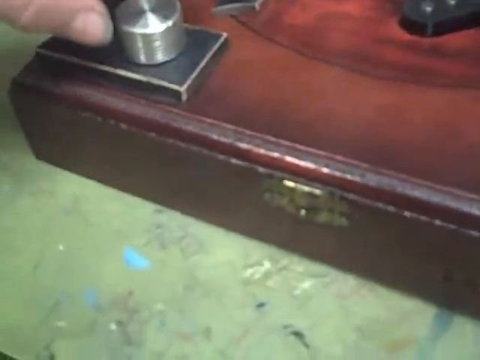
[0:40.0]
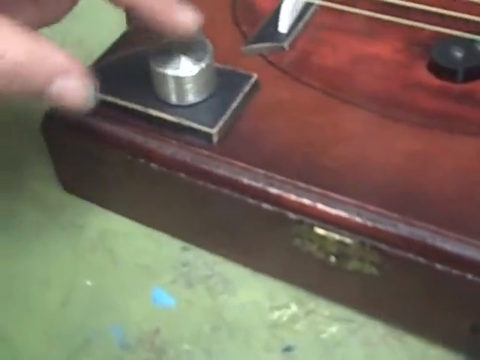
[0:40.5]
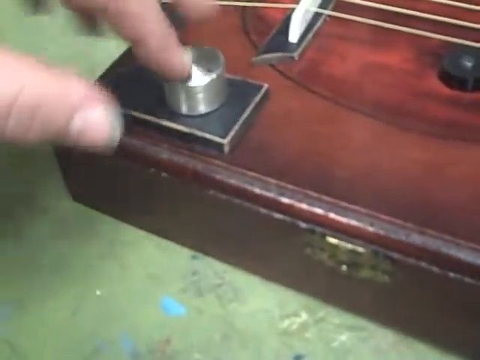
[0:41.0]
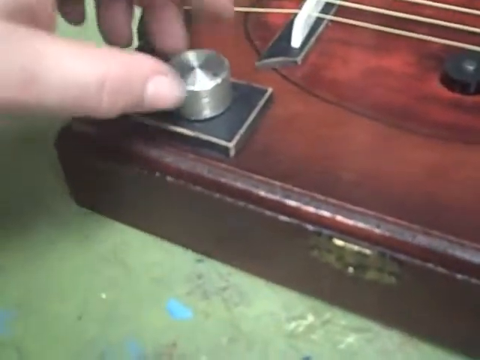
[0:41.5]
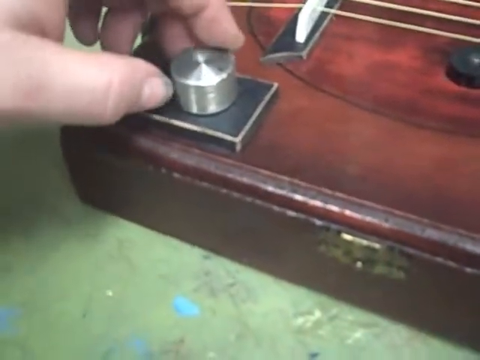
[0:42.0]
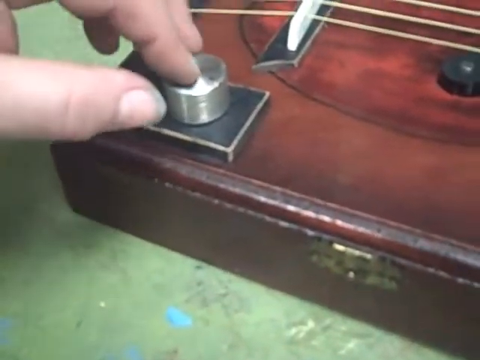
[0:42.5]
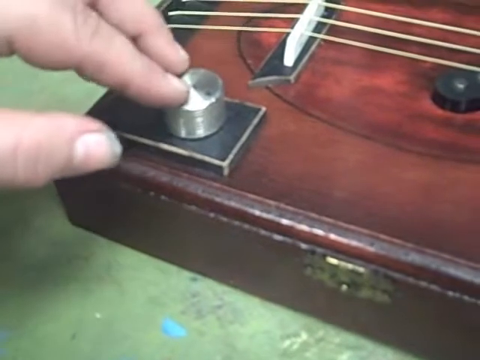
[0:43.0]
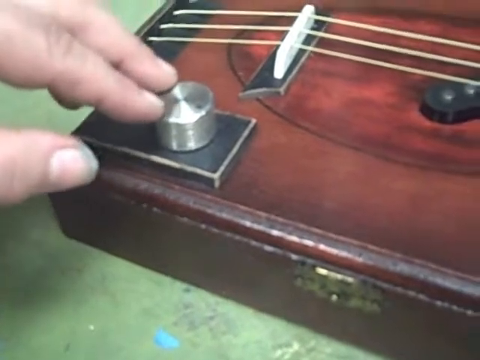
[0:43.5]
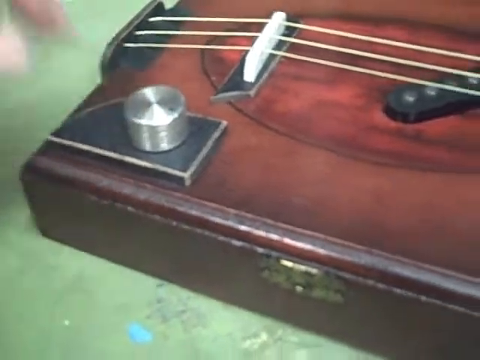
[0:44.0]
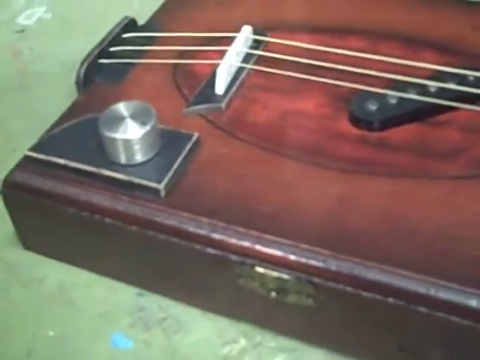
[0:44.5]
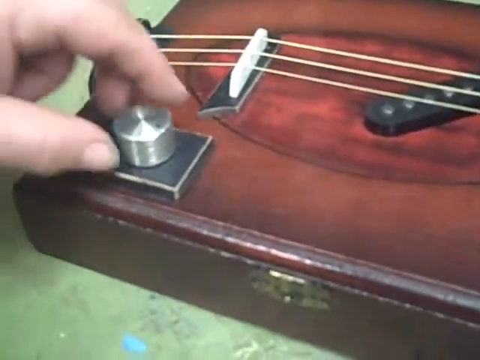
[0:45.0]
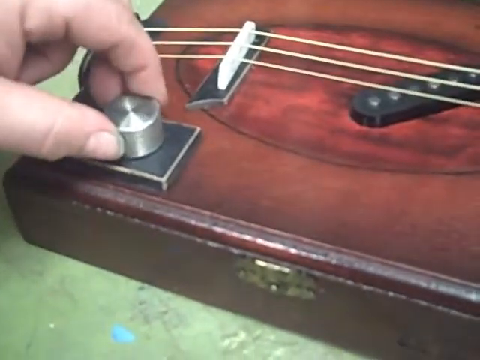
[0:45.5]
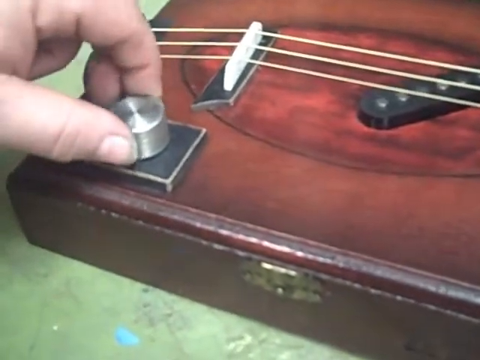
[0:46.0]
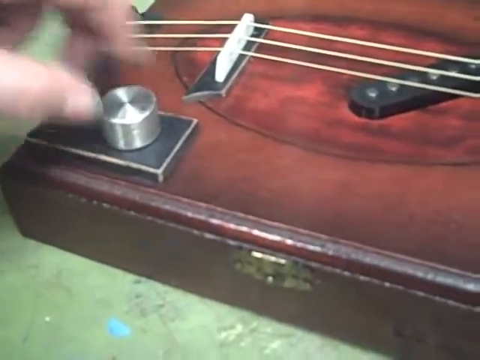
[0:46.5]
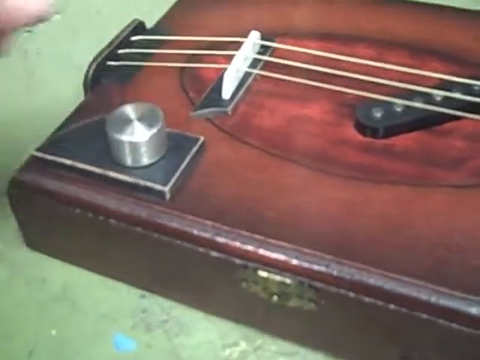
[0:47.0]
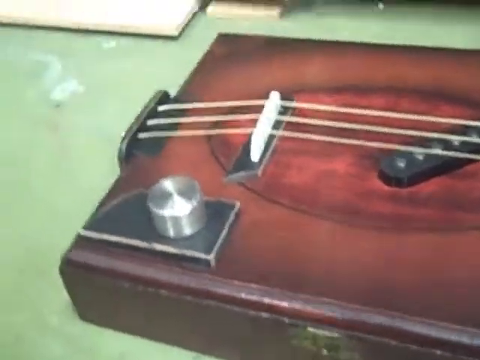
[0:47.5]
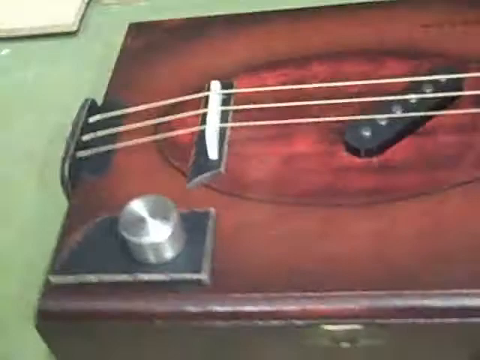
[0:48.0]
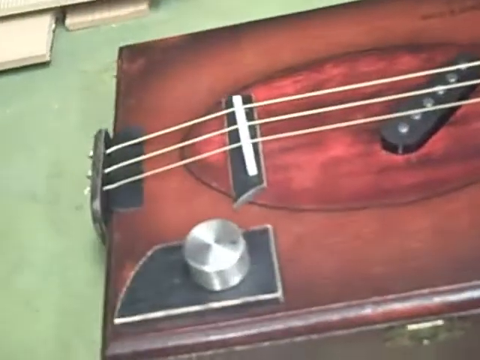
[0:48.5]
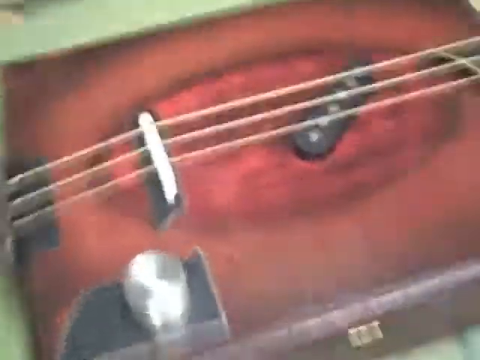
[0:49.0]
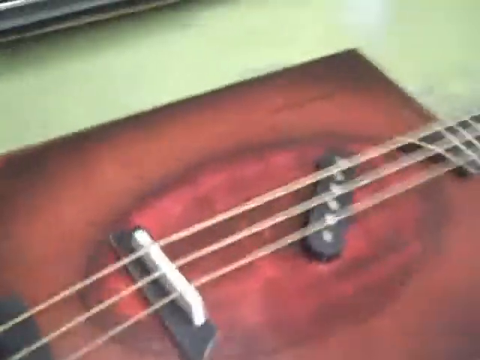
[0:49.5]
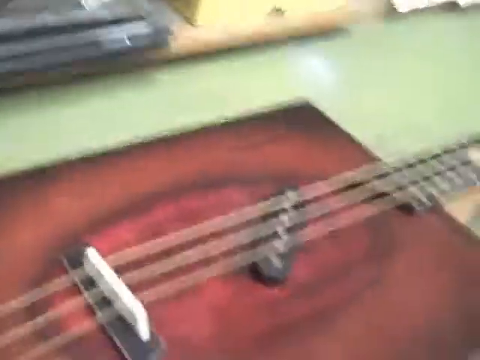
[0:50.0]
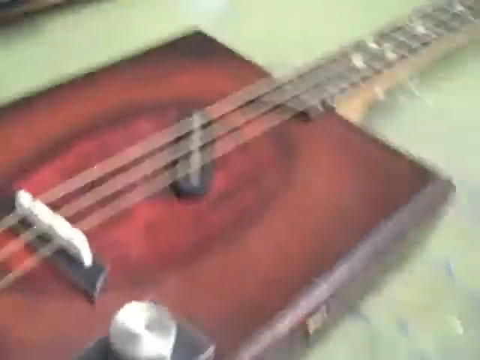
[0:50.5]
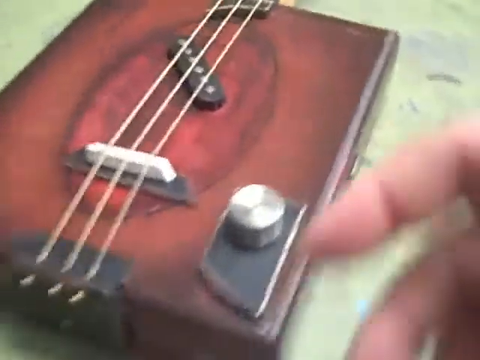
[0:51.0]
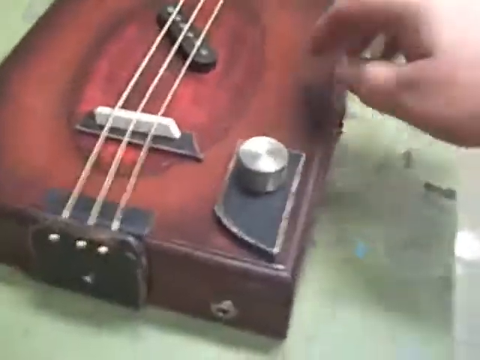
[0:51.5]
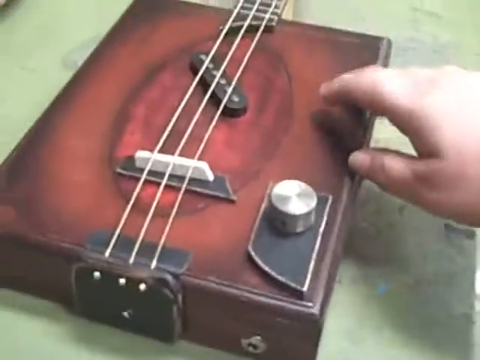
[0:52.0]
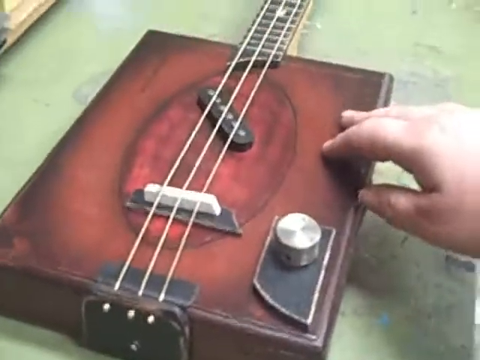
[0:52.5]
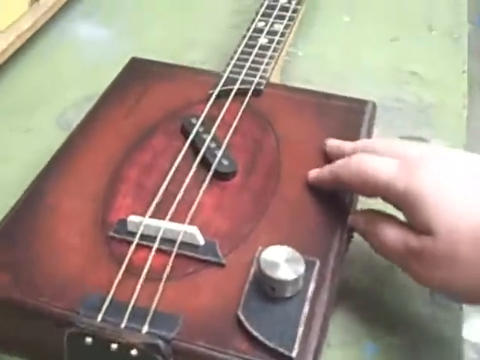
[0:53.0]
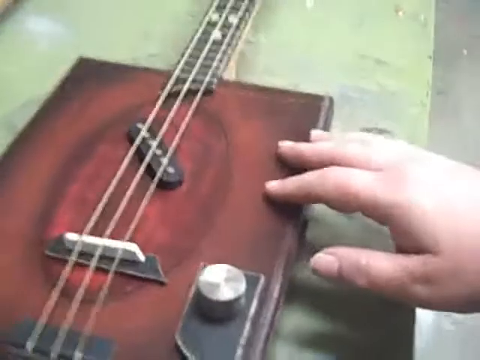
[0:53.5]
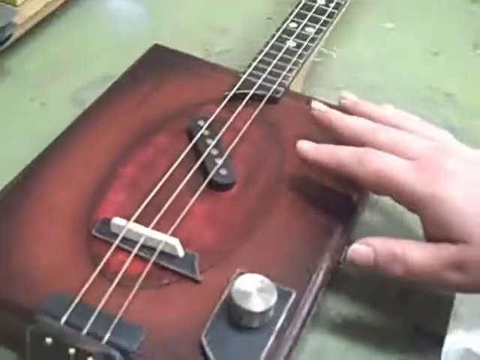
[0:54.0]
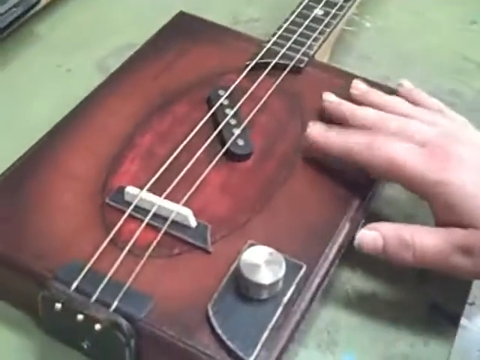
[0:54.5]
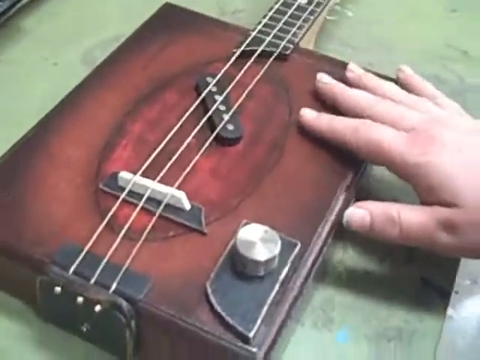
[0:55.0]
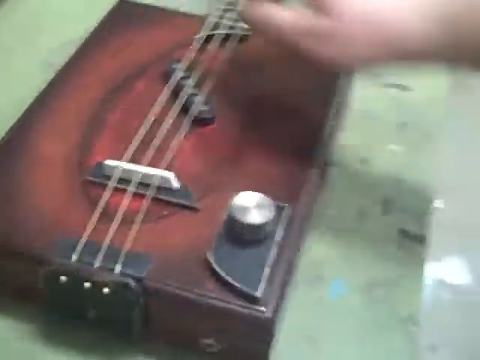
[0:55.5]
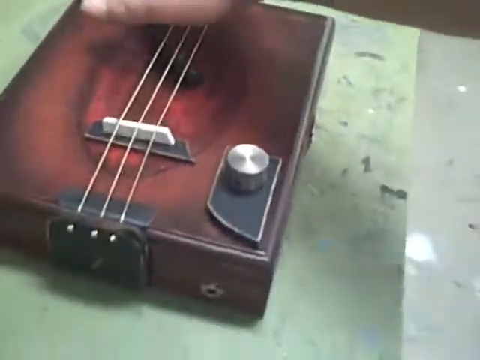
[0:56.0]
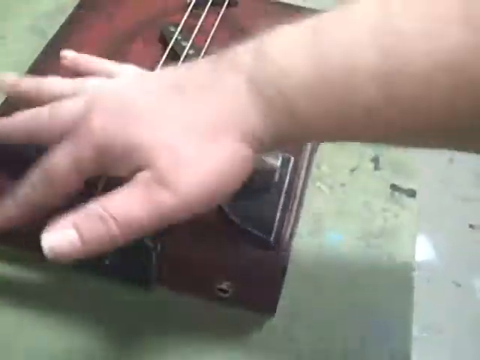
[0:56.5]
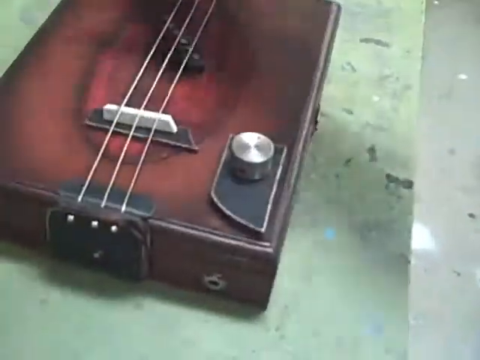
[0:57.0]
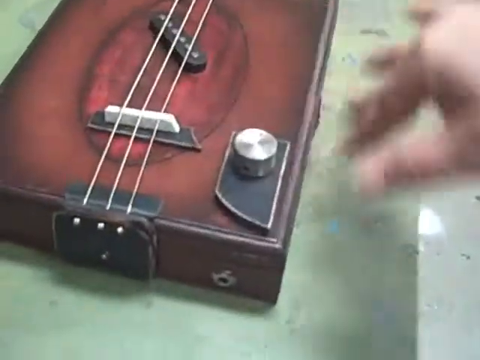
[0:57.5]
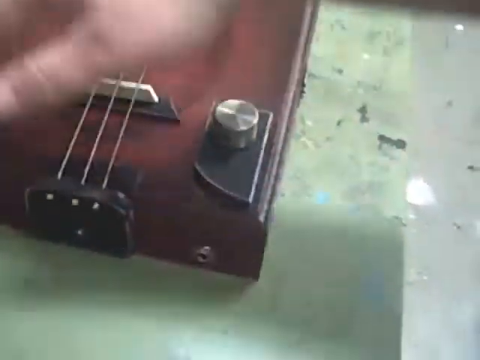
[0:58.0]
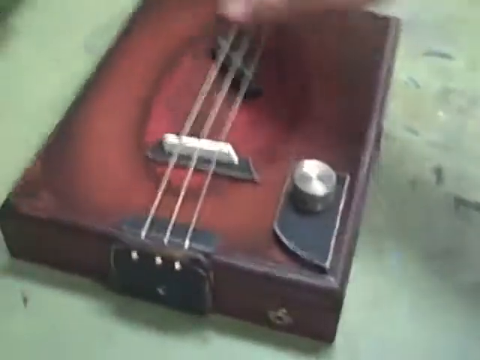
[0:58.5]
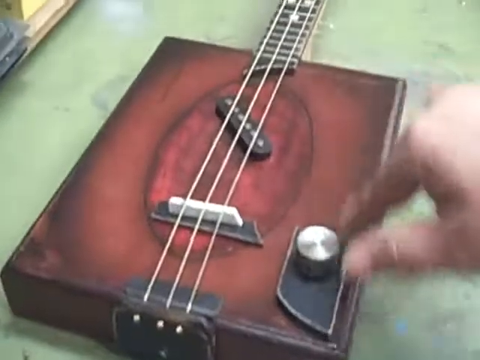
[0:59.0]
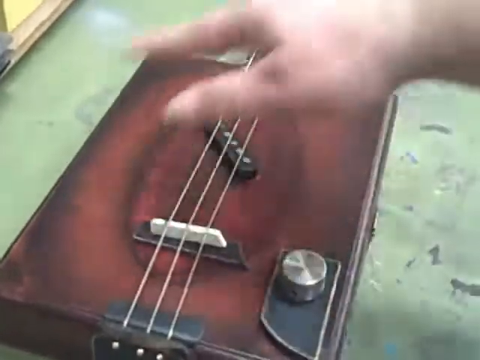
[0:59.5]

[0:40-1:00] He taps on the silver knob on top of the black board with two fingers for a while. The camera zooms out a bit, then his fingers are focused on the silver knob again, and he eventually turns it, showing that this part is for tuning the guitar. He then moves more toward the center of the guitar, tapping on it with his four fingers on the right-hand side and then brushing the left-hand side as if explaining something in detail. The camera zooms out a bit, and he moves his hand in a circular way.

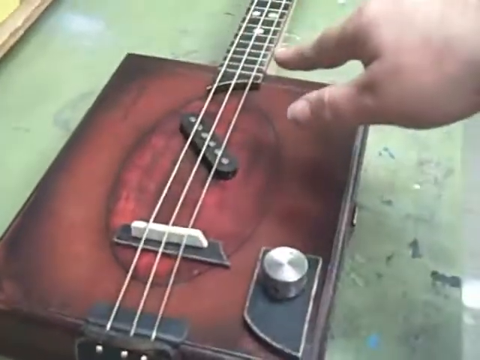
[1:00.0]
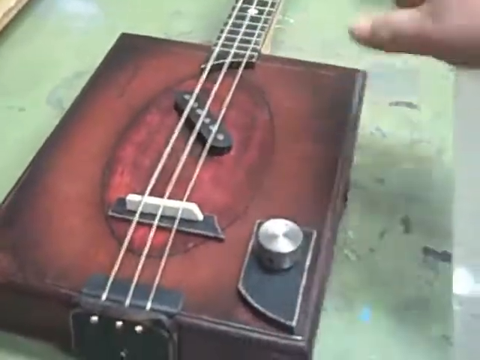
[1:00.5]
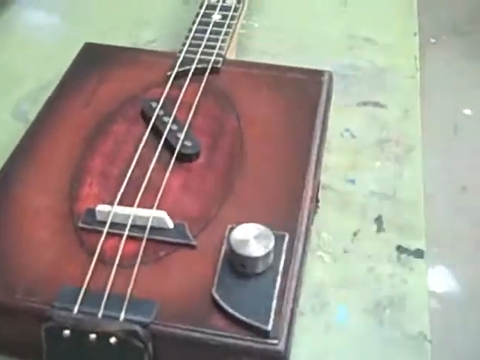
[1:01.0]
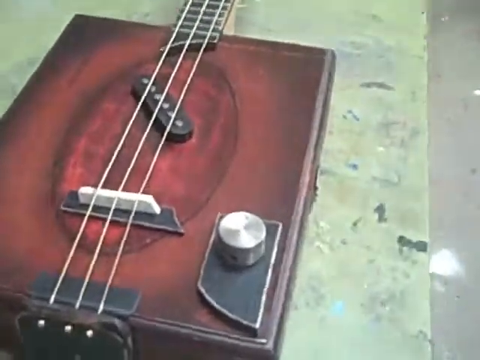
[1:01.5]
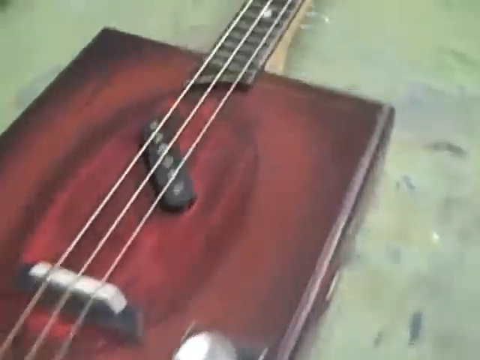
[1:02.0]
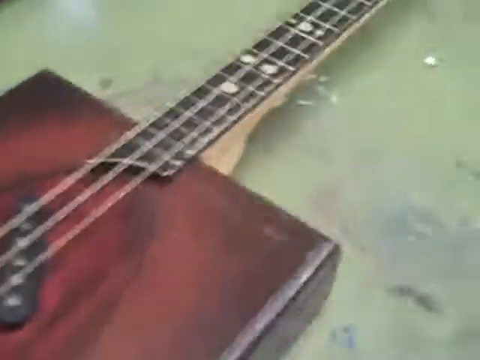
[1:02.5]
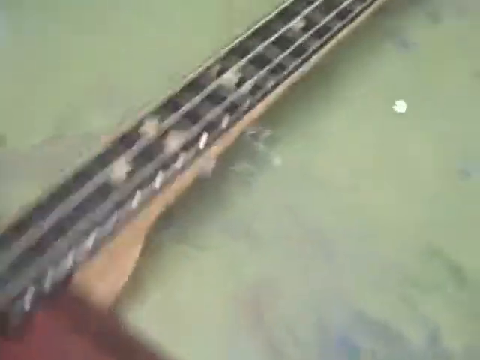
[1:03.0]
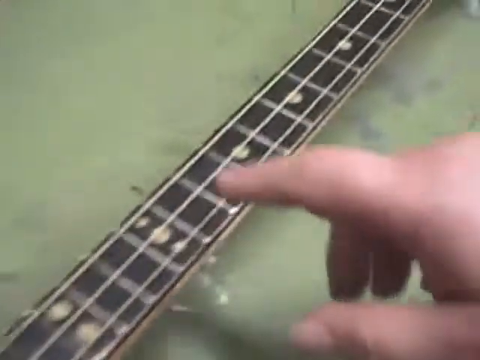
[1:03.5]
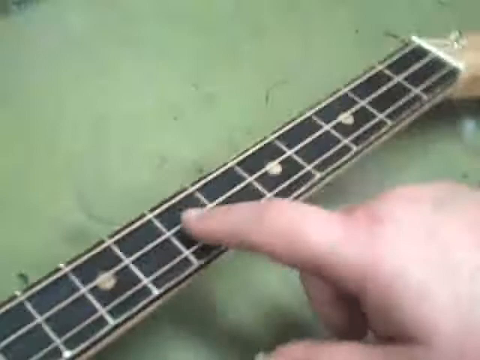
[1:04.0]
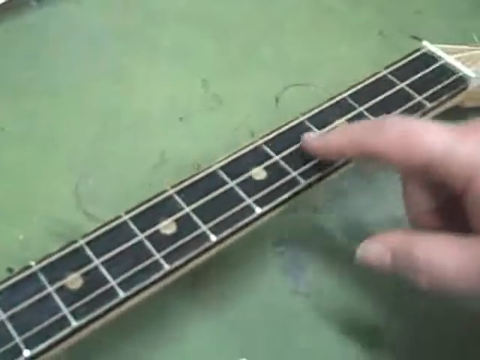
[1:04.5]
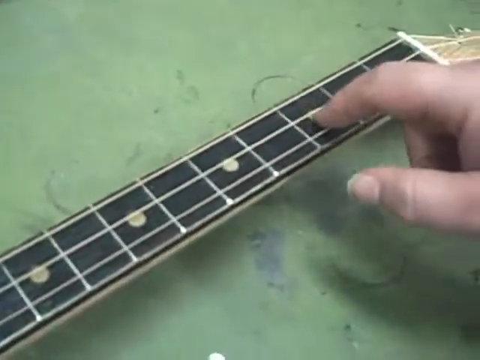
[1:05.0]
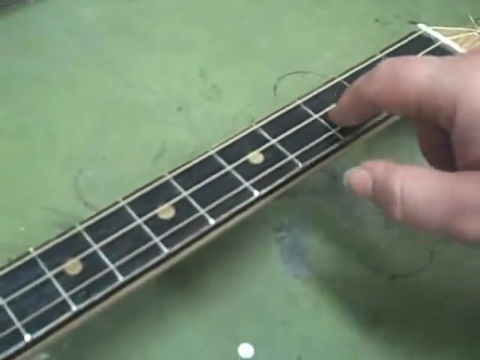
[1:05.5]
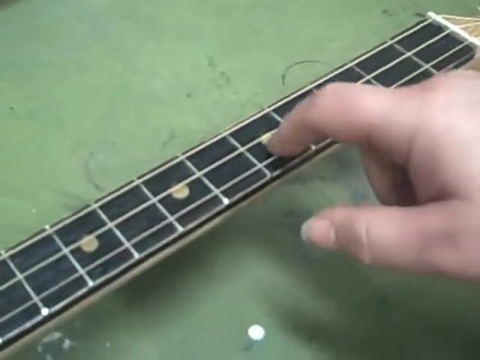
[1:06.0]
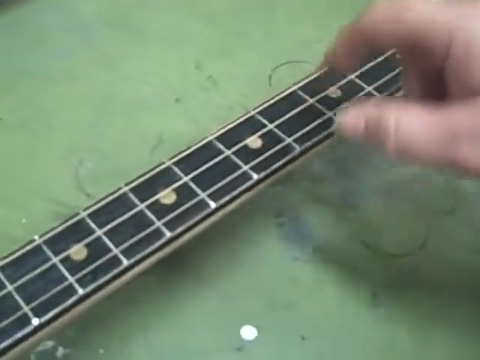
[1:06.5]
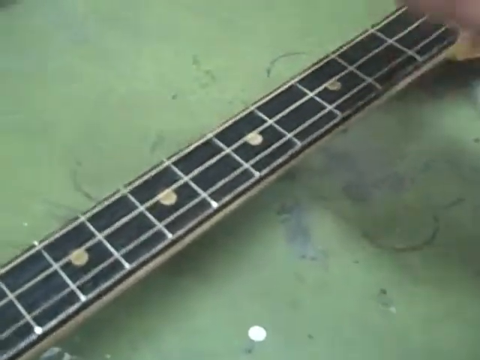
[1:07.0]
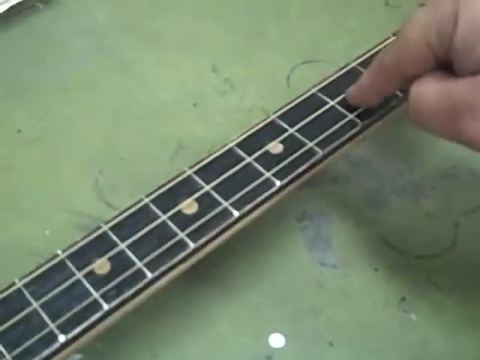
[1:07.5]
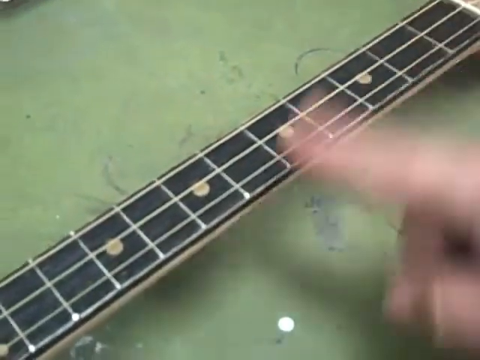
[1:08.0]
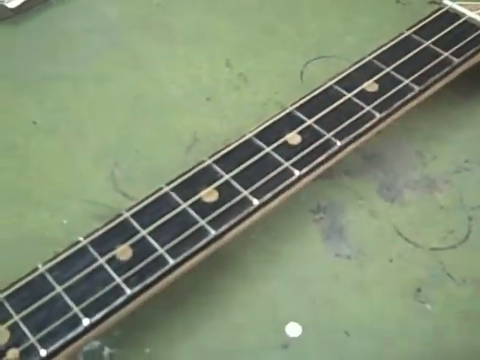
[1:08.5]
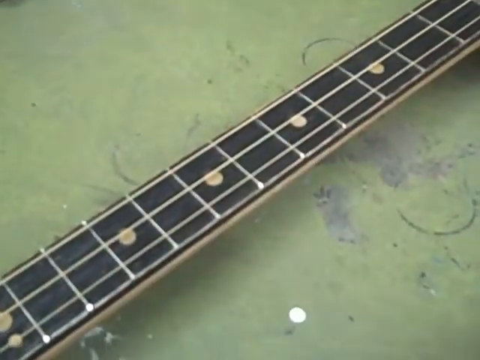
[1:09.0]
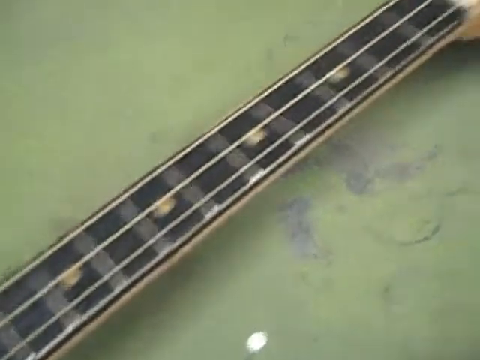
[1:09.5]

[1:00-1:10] He moves his hands up and down and then seems to be done with the bottom part of the guitar, which is shaped as a square. The guitar is on top of a green table. The focus moves to the arm of the guitar, which is black, with a lot of vertical lines and horizontal strings. There are some gold dots in between the squares, and the finger points at one or two of them.